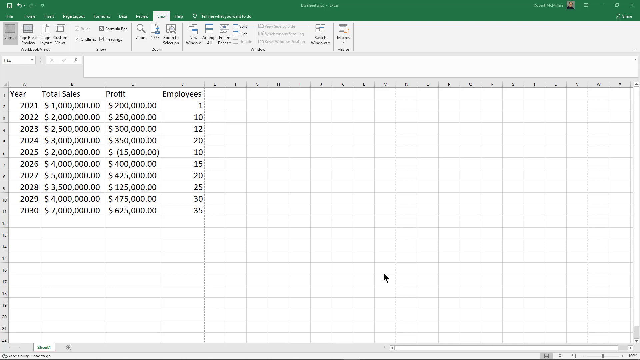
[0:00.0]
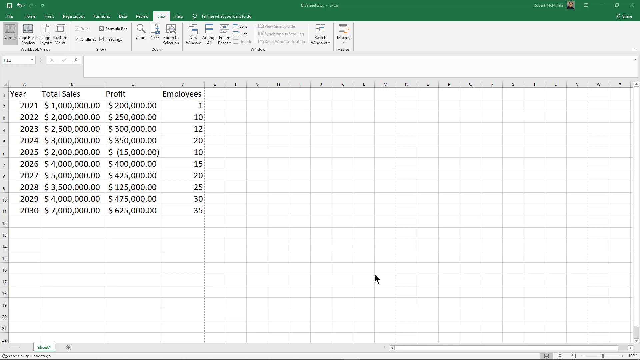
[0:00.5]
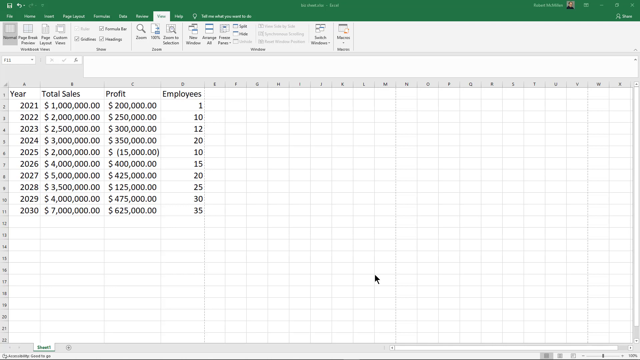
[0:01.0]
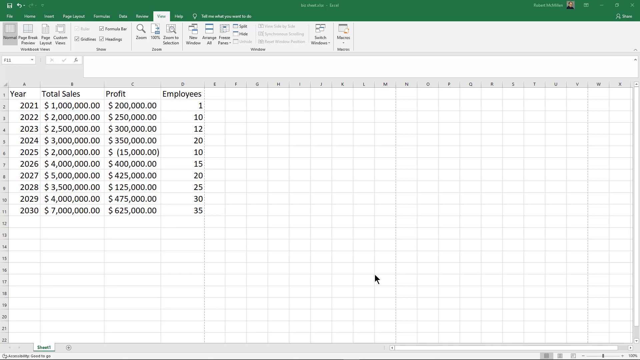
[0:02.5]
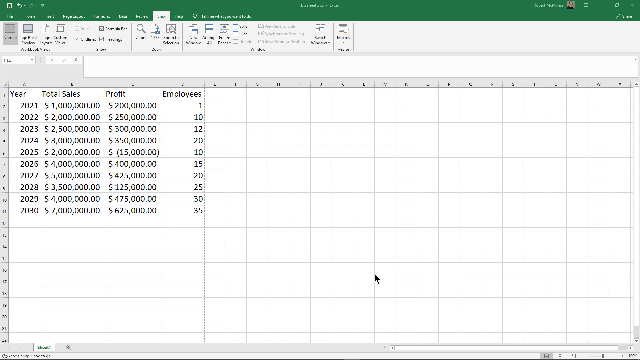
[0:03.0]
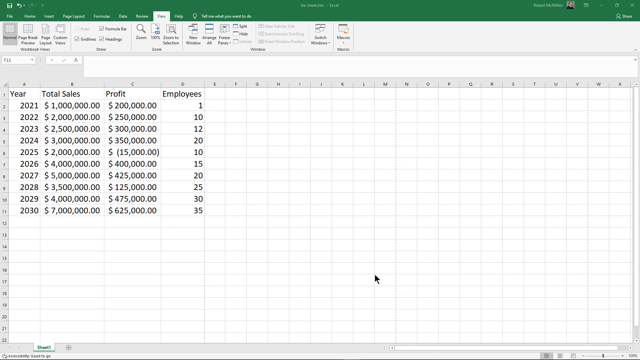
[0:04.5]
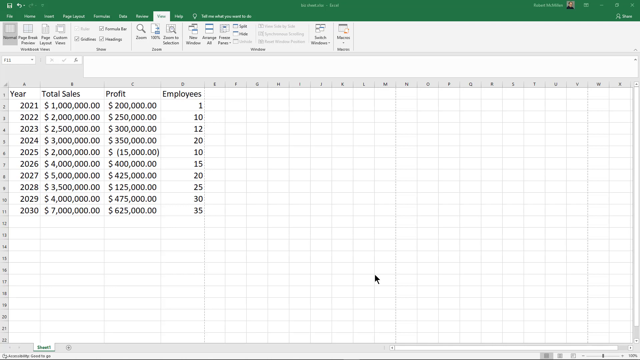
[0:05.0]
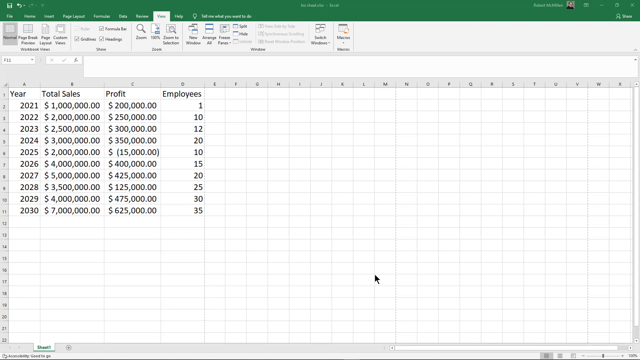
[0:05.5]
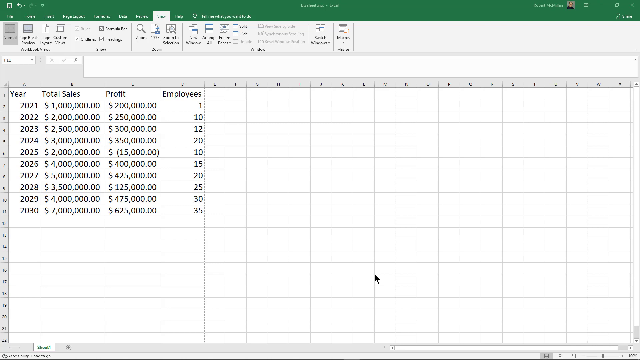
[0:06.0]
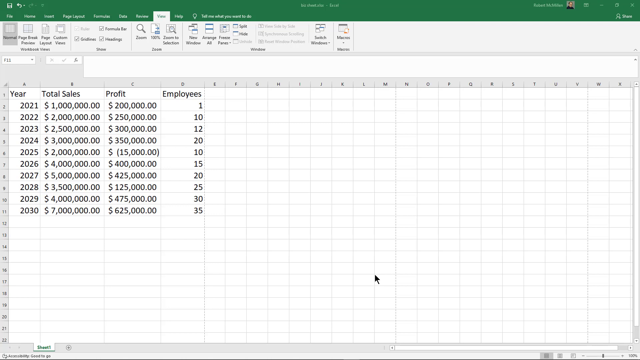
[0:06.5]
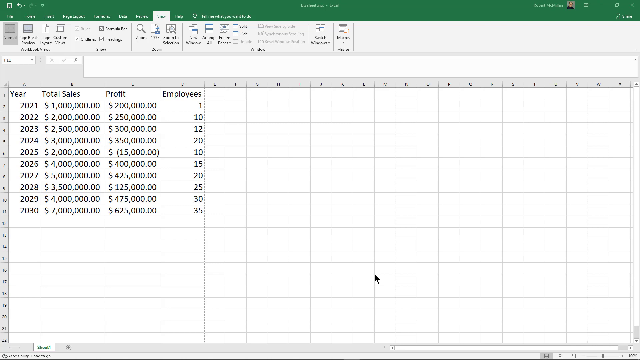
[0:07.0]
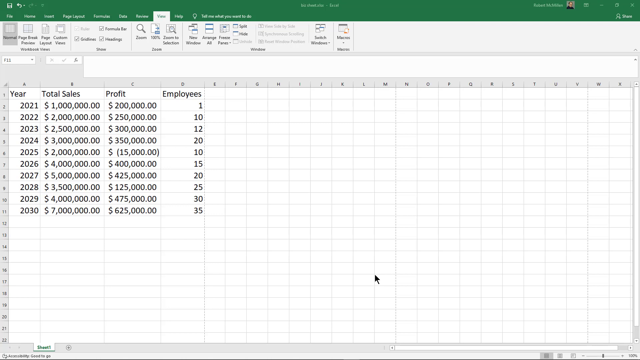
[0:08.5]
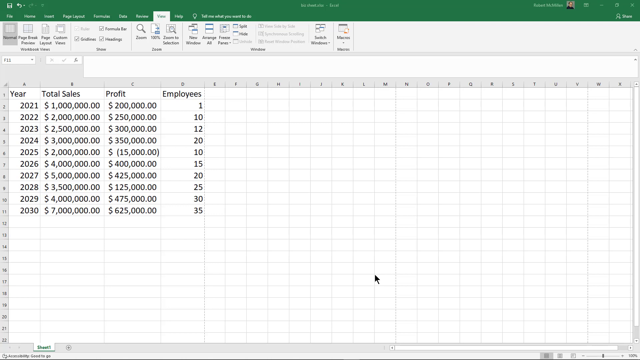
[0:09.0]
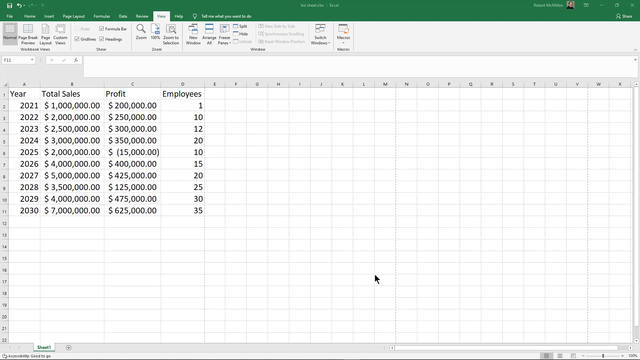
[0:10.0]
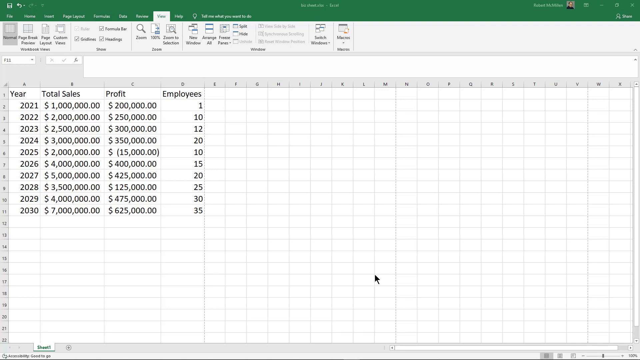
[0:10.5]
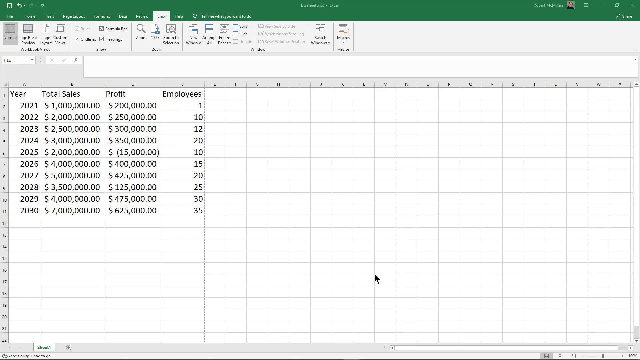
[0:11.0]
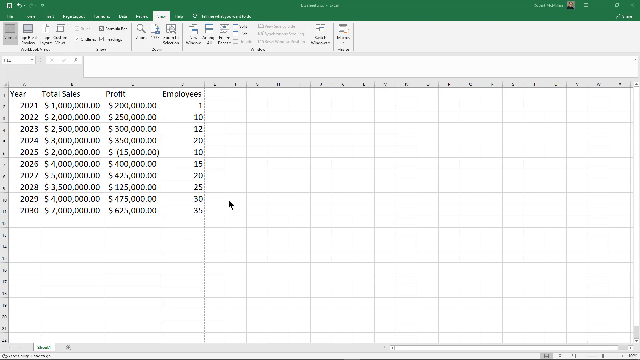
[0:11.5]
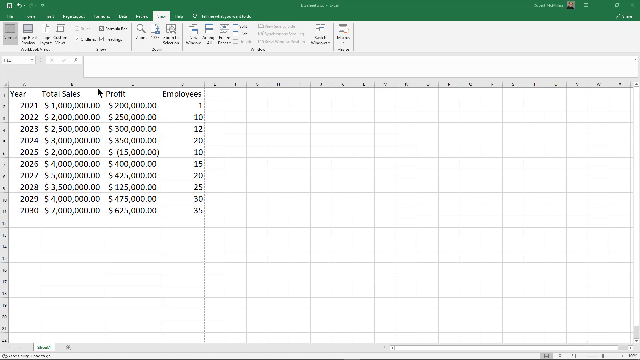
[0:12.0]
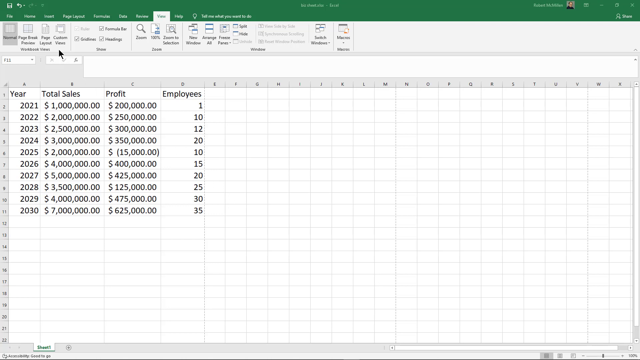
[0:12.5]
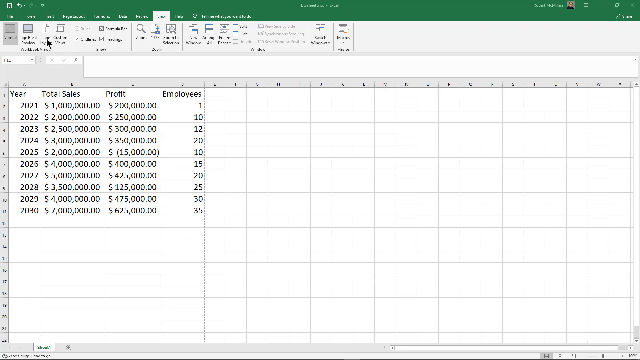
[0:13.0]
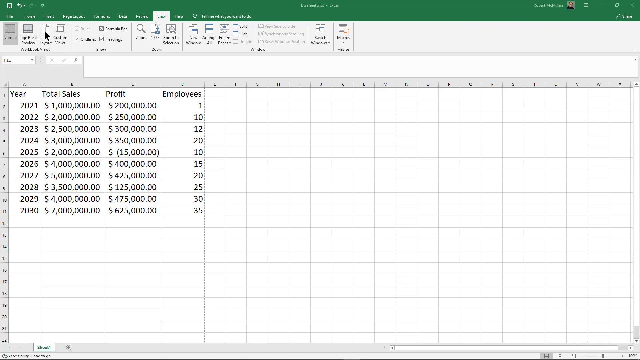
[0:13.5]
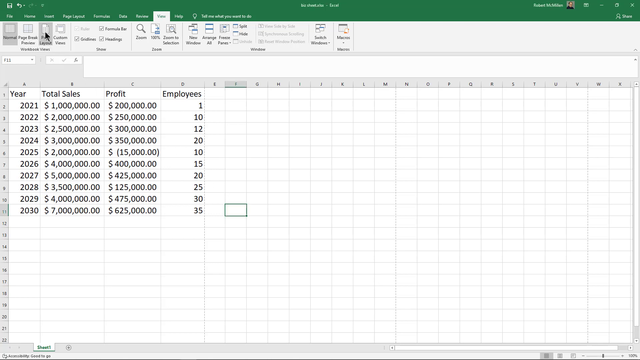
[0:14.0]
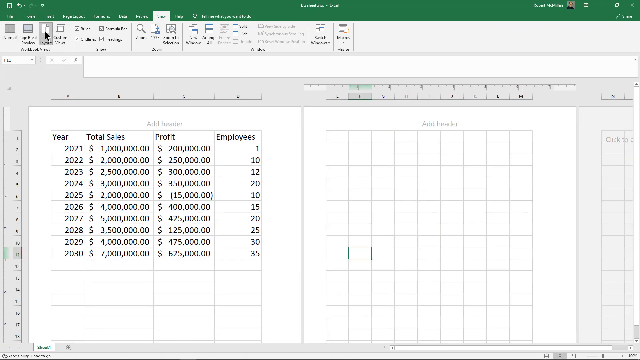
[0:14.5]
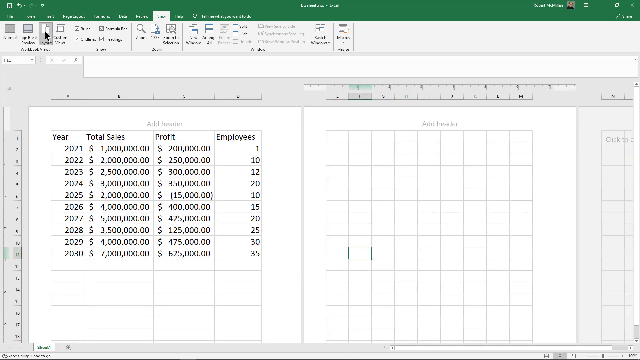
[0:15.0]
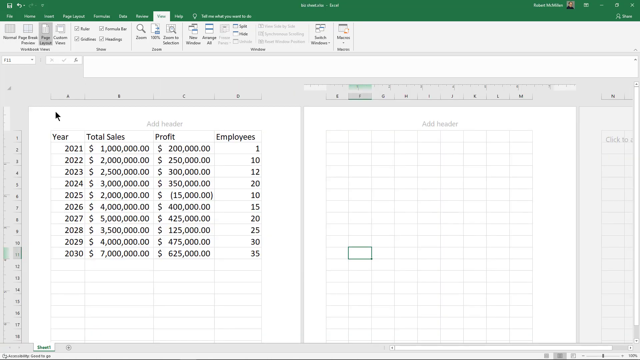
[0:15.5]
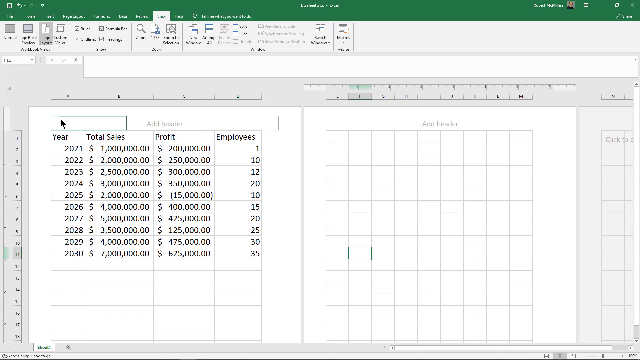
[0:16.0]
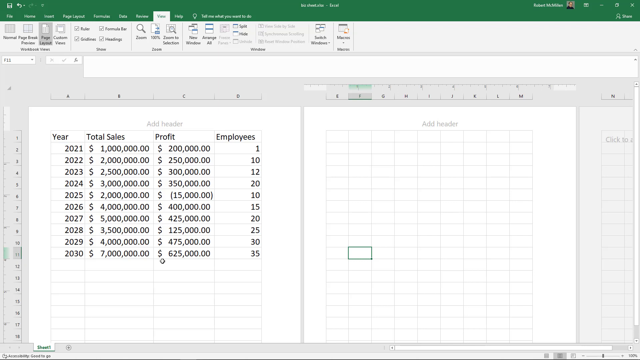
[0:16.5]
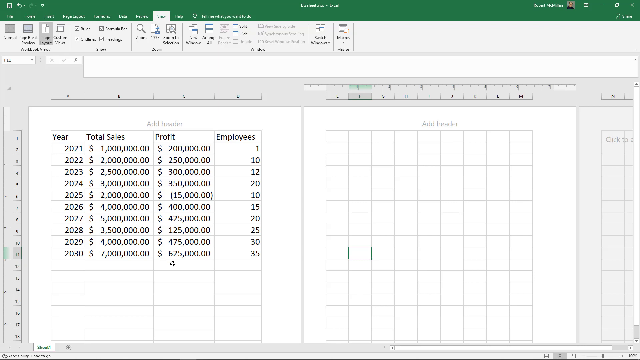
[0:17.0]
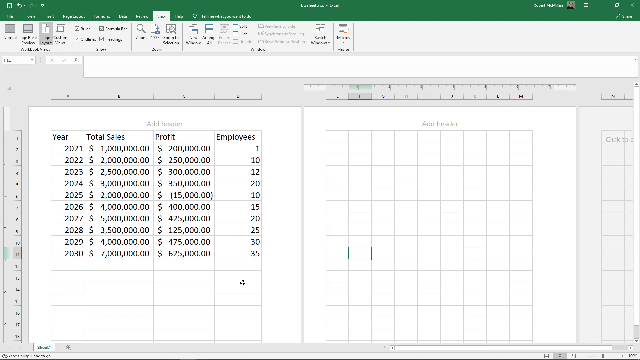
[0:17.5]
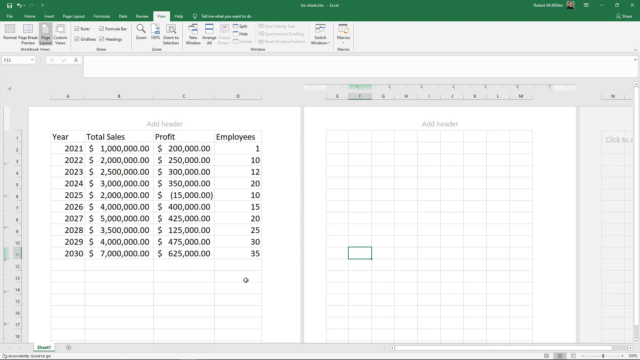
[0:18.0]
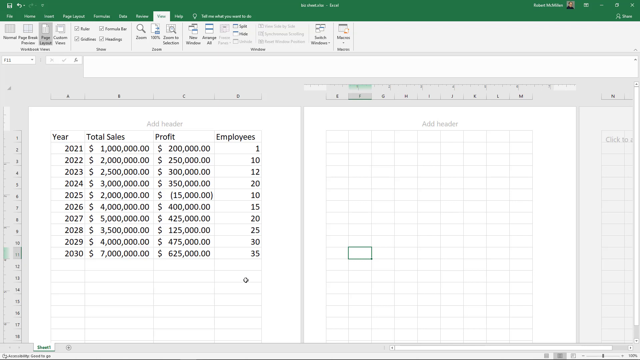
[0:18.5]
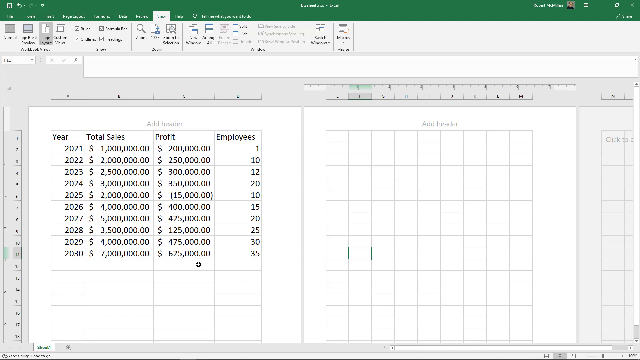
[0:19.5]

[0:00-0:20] A spreadsheet is filled with a whole bunch of numbers written in black text. The person clicks on one of the options at the top, and this seems to divide the spreadsheet in half. The cursor moves around. The spreadsheet has four titles: "year", "total sales", "profit" and "employees". Under employees, the numbers kind of run from 2 to 11, and the years run from 2021 to 2030. The sheet seems to be a projection of total sales, profits and employees: for 2030 it lists 35 employees, profits of $625,000 and total sales of $7,000,000.